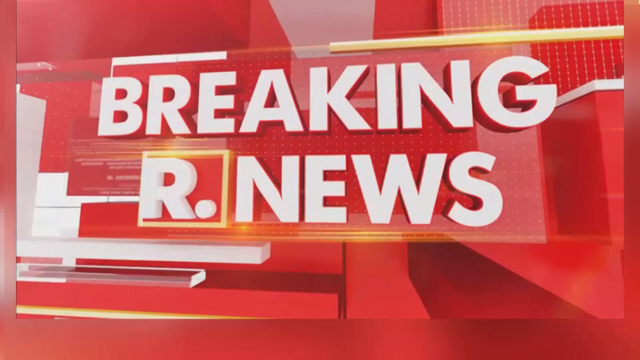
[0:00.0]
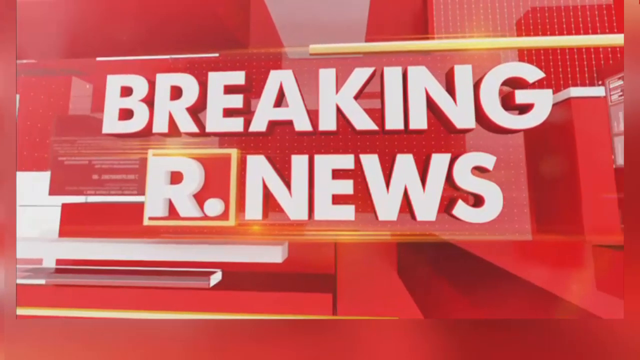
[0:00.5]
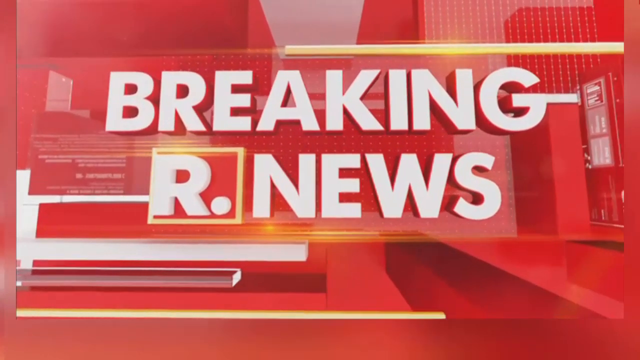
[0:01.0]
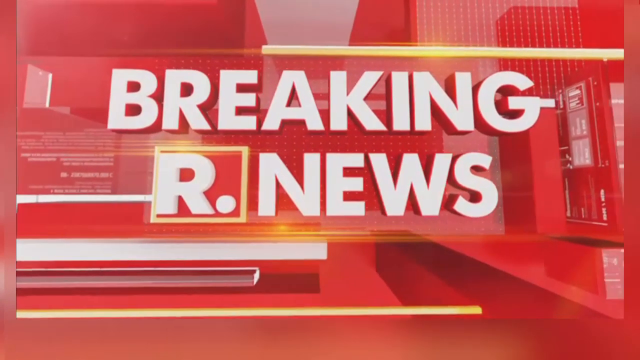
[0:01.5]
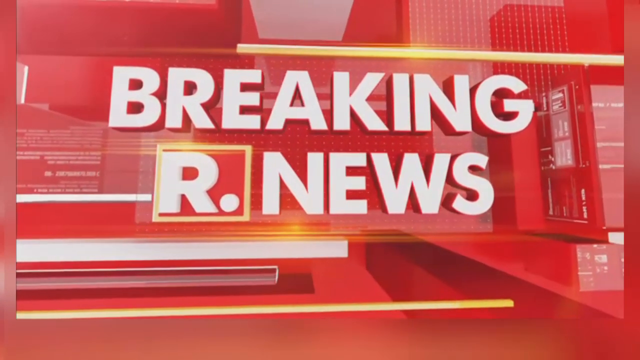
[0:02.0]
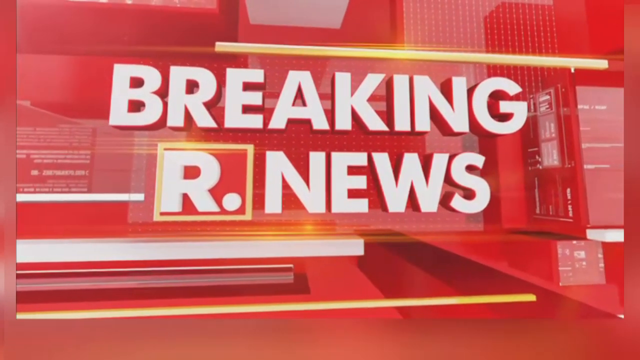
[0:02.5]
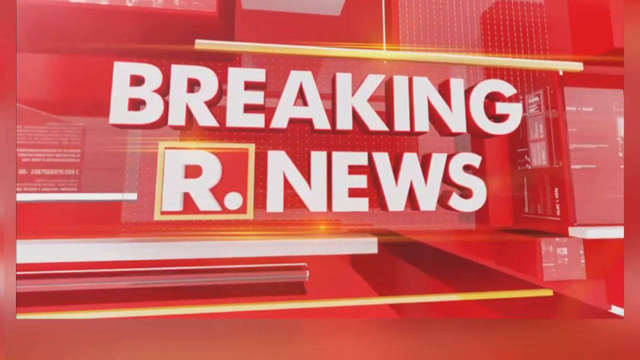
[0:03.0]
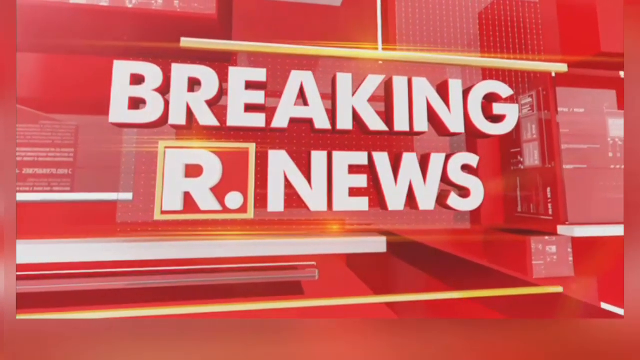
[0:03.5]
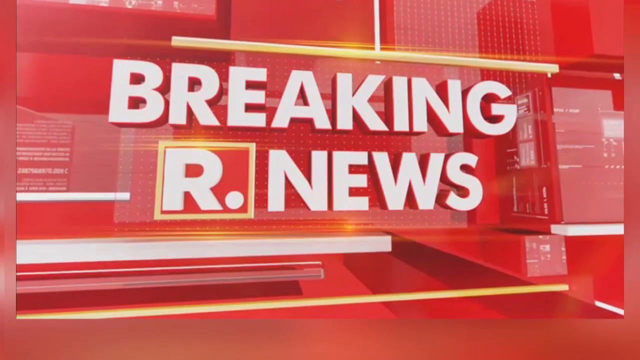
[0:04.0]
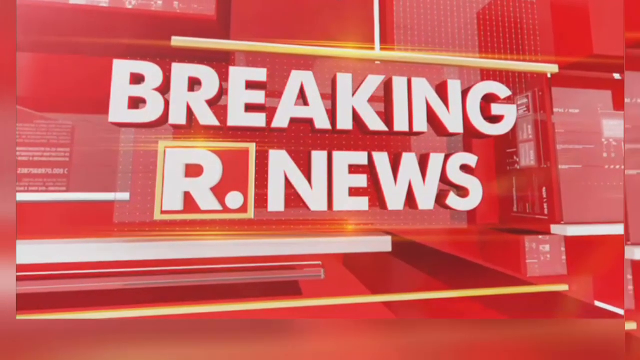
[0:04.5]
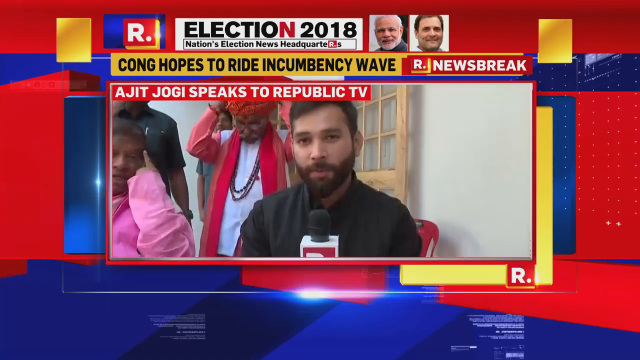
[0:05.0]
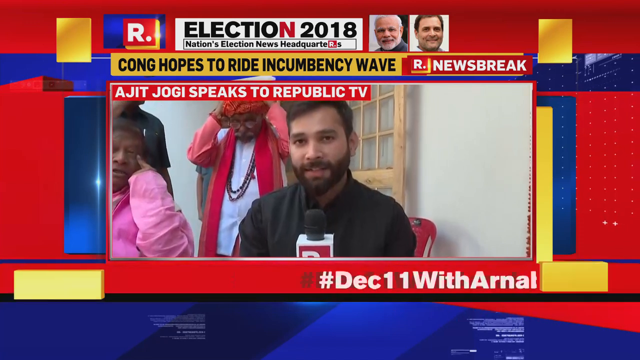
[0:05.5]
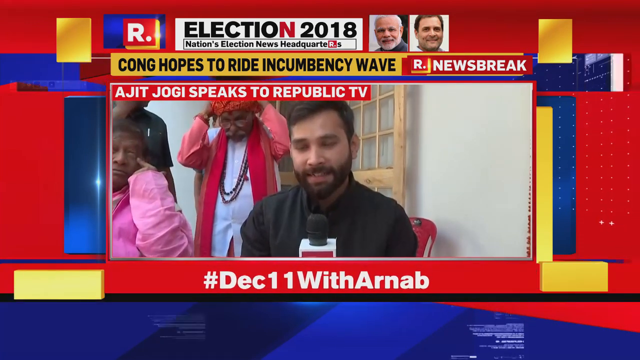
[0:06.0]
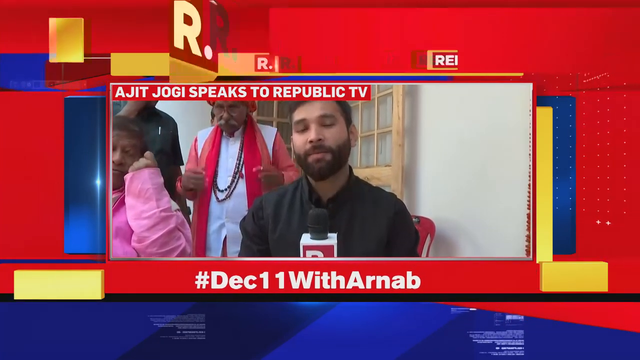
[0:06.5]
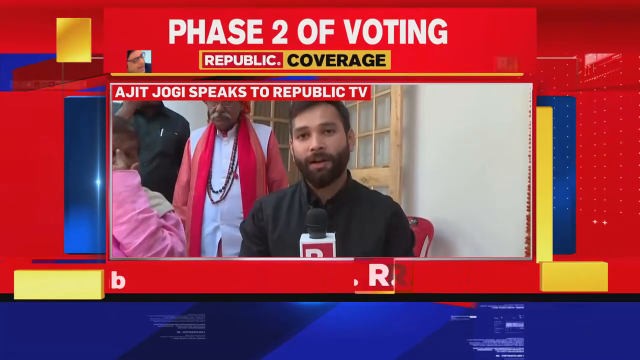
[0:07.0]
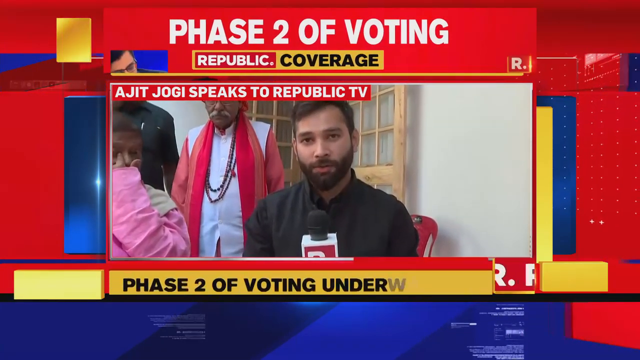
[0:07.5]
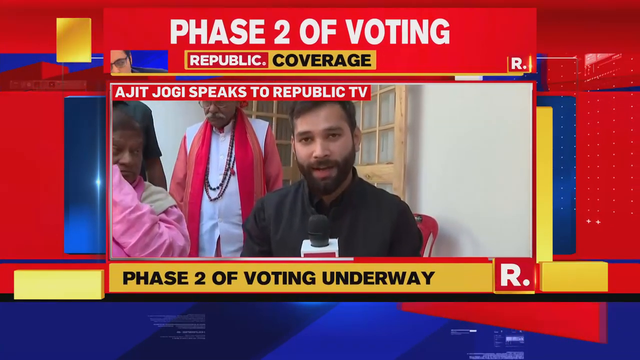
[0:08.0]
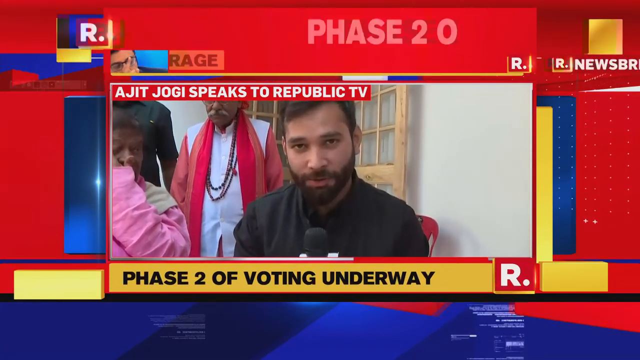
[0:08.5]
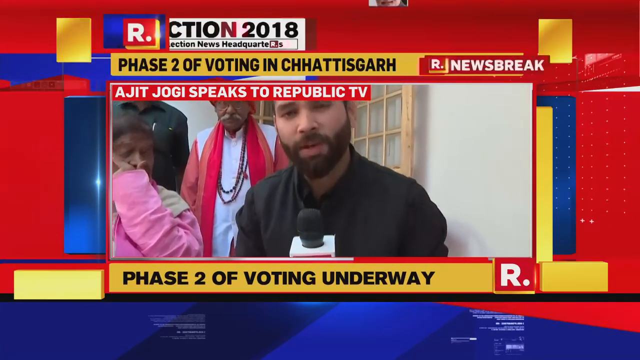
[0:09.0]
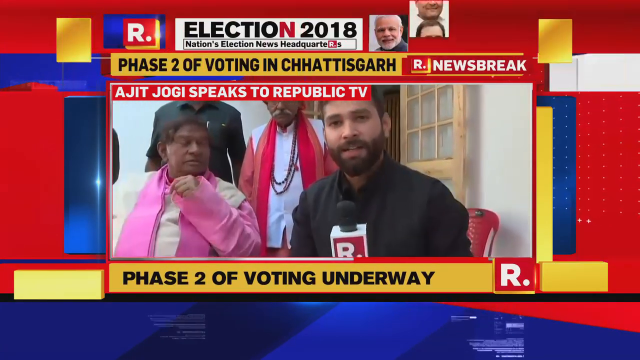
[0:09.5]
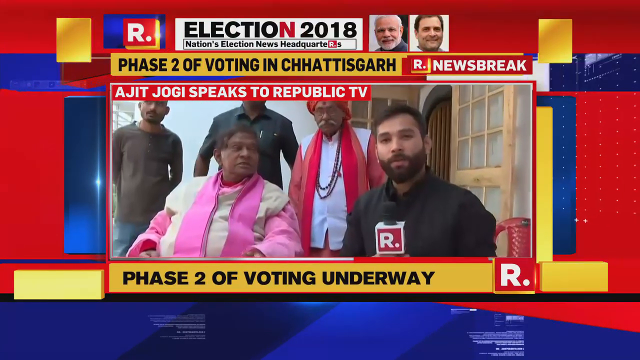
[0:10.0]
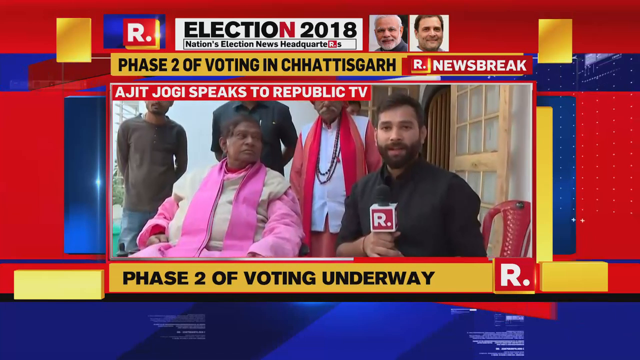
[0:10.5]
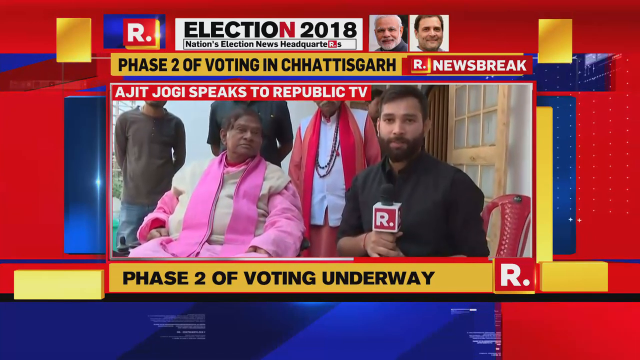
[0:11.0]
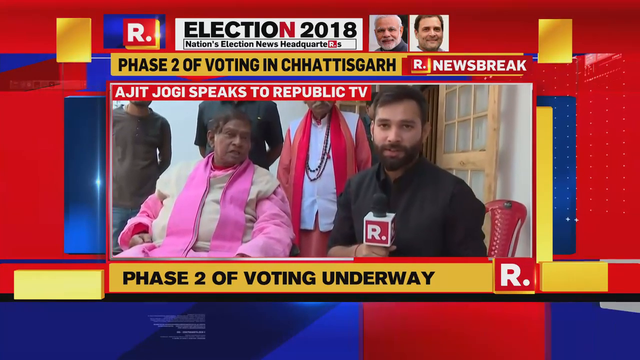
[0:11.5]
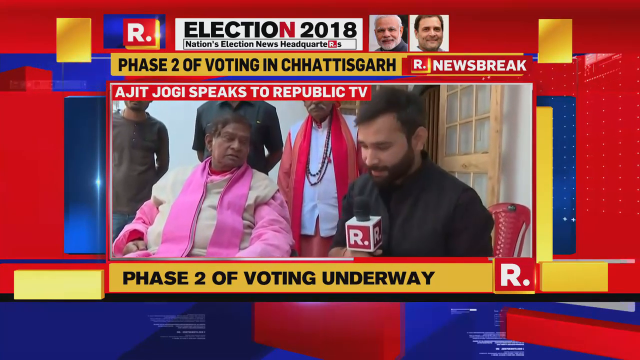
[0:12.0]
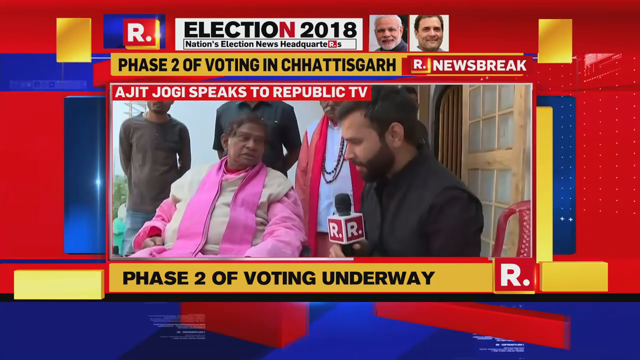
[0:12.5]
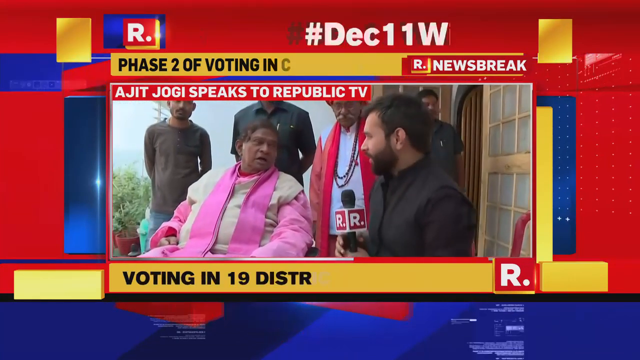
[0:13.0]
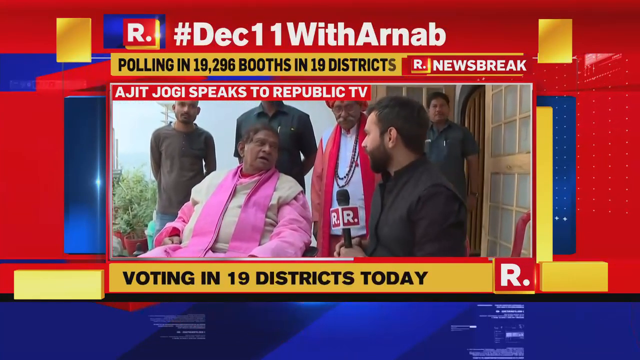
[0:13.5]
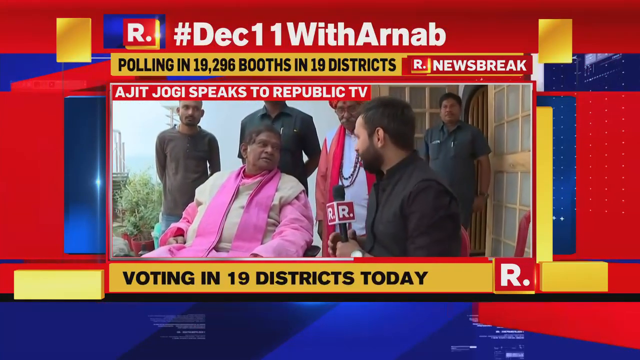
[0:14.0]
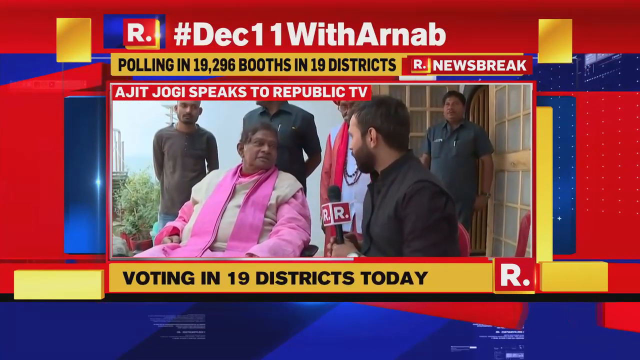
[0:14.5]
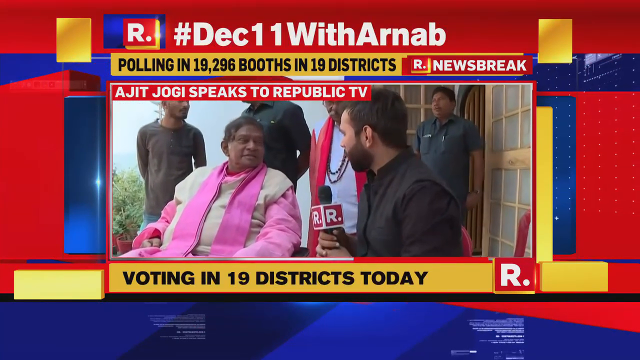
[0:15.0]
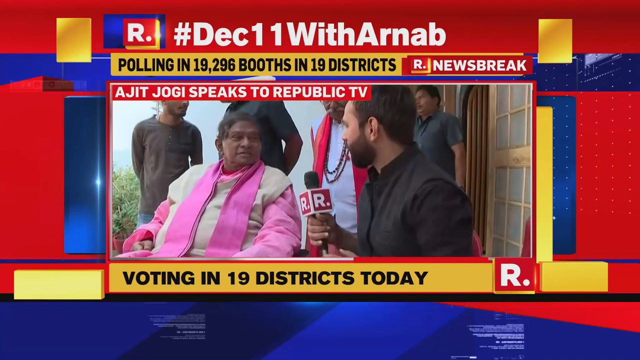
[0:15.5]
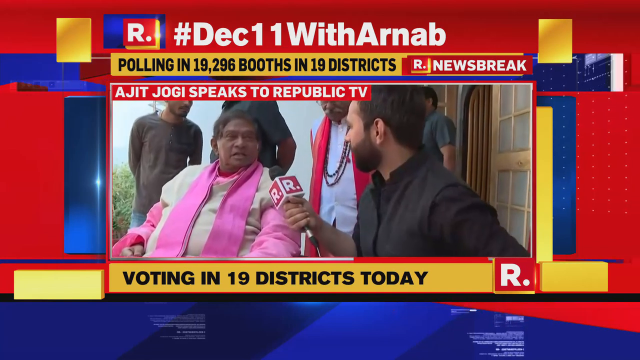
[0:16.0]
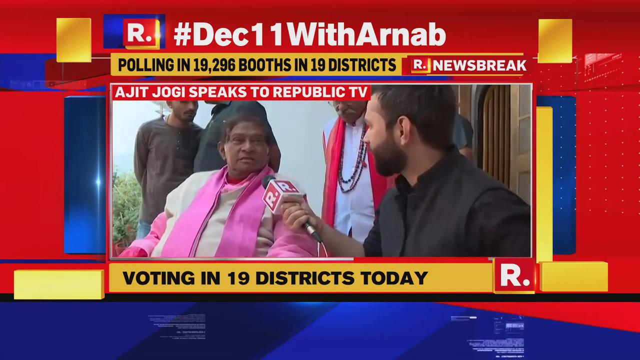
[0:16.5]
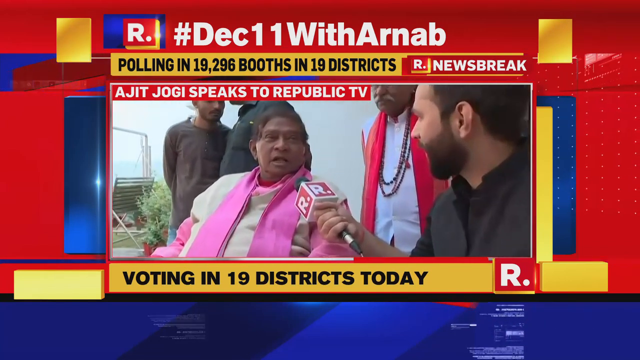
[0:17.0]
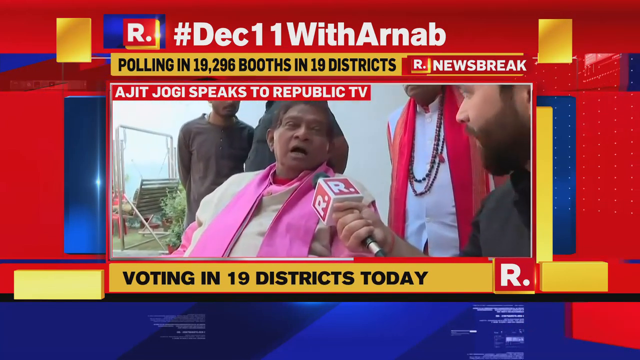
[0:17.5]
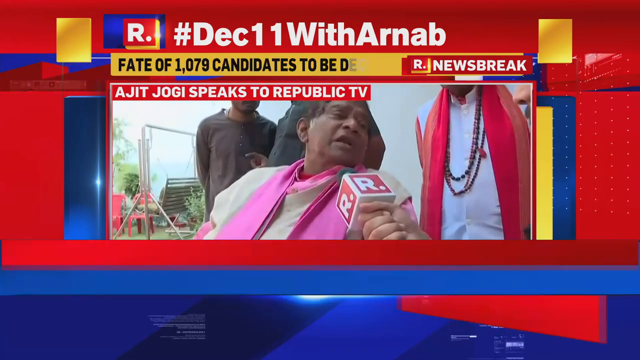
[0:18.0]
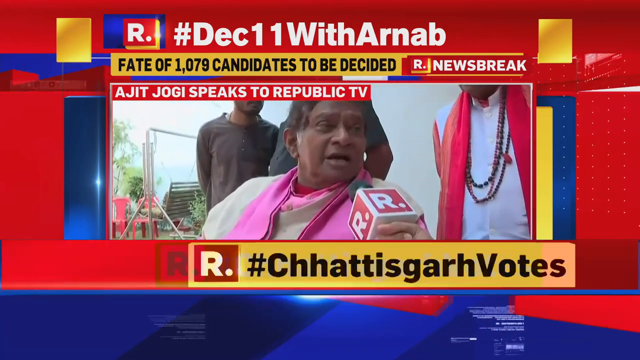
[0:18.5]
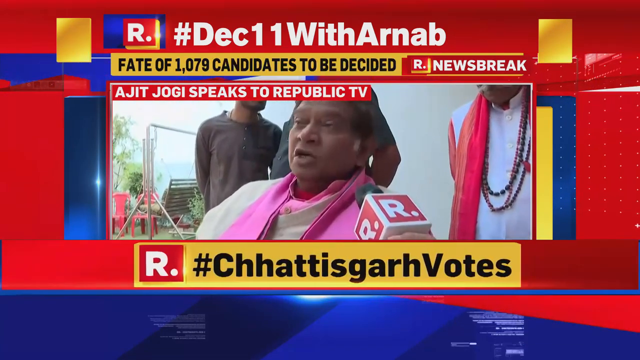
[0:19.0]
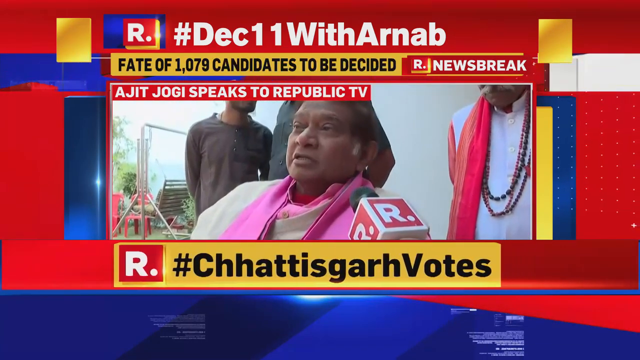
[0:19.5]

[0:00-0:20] Against a red background with lots of graphics, lines and movement, white all-caps text reads "BREAKING NEWS". To the left of "news" is a text box containing an R followed by a period; it is also red and kind of outlined in yellow. The view switches to a new graphic with lots of movement in red, blue and yellow, with moving text boxes and lines. At the top, apparently, it says "election 2018", and underneath, in smaller black text in a white text box, "nation's election news headquarters". There are two small pictures of two different men, and beneath them a yellow text box in black text reads "Kong hopes to ride incumbency wave". To the right, "news break" appears in white text on red with the little R. The R with a period, possibly the station's logo, also appears to the left of the election text box, and in "election" the N is red. Below the yellow text box, a red one reads "Ajit Jogi speaks to Republic TV" in white. A man with a black beard and mustache, short black hair and a black shirt appears; he looks like he is out on the street reporting, with some people kind of to his left. Beneath him, white text shows a hashtag for December 11th with Arnab, with December abbreviated as "DEC". The headlines keep changing: the yellow headlines at the top and bottom kind of swoosh in and out, the top reading "phase two of voting in Chhattisgarh" and the yellow one below "phase two of voting underway". They change again, with the bottom reading "voting in 19 districts today" and the top "polling in 19,296 booths in 19 districts". The man is now interviewing a woman sitting in a chair. She is a little overweight and older, with darker skin, seemingly from India, and wears a white shirt with a pink long-sleeve shirt underneath and a pink scarf. Then a yellow text box swooshes in from the right reading "#Chhattisgarh votes", with the R logo to its left.